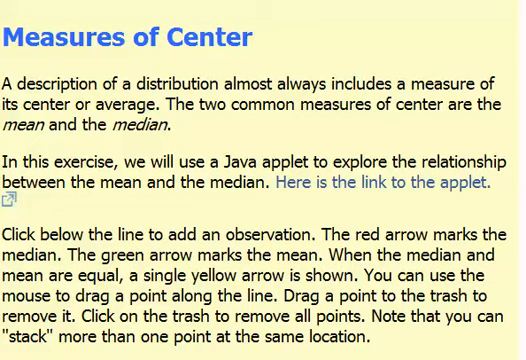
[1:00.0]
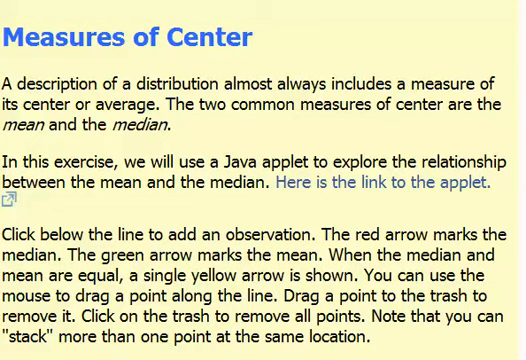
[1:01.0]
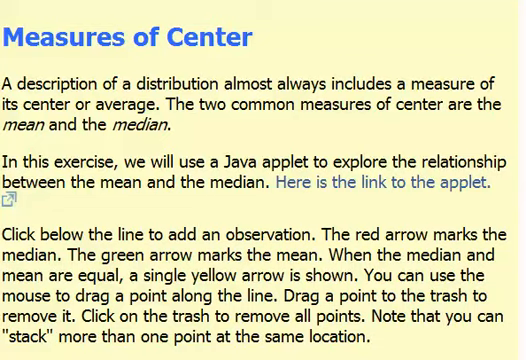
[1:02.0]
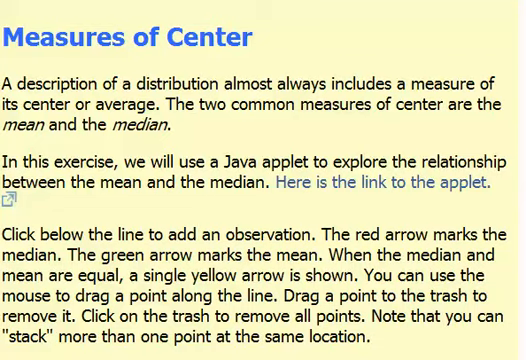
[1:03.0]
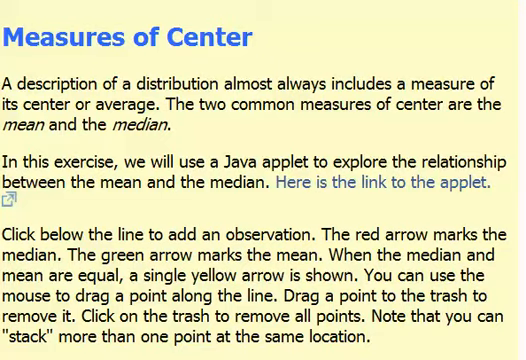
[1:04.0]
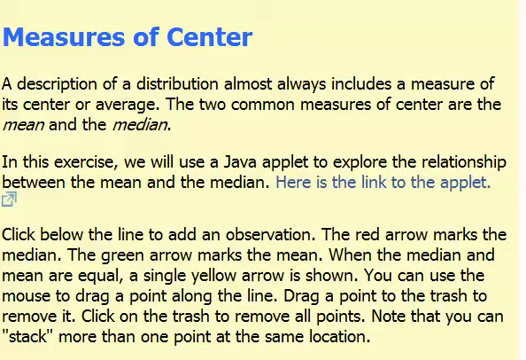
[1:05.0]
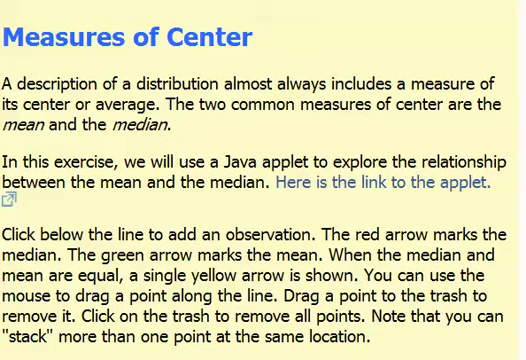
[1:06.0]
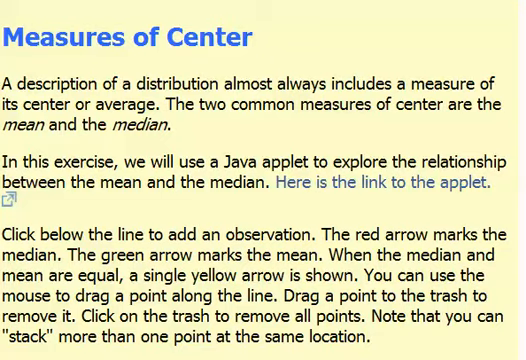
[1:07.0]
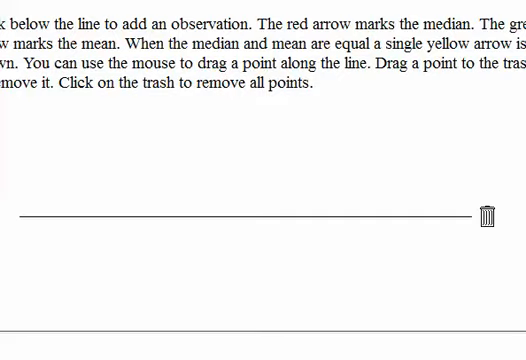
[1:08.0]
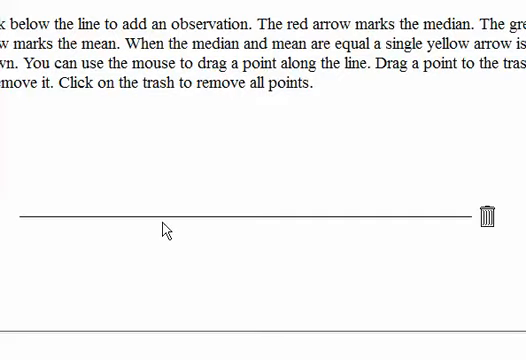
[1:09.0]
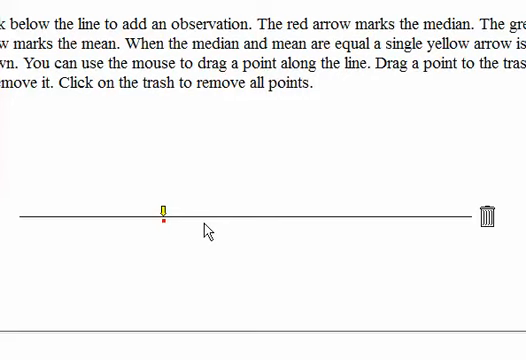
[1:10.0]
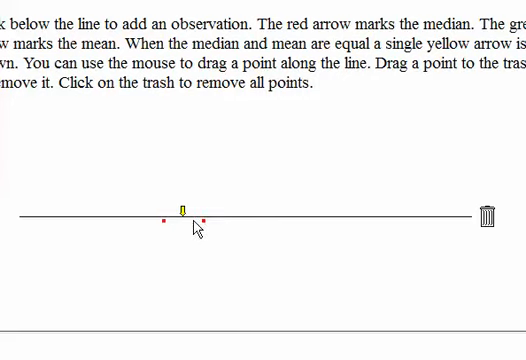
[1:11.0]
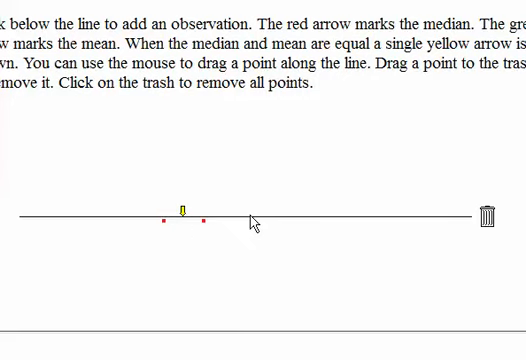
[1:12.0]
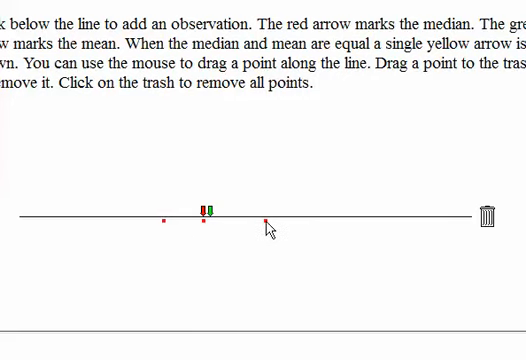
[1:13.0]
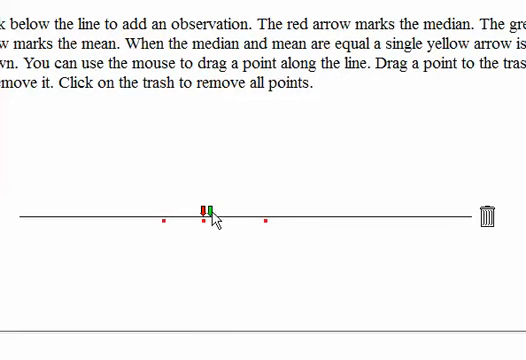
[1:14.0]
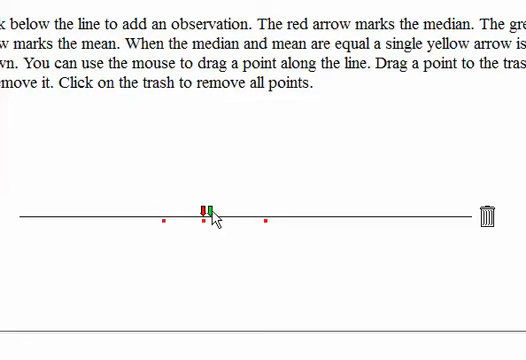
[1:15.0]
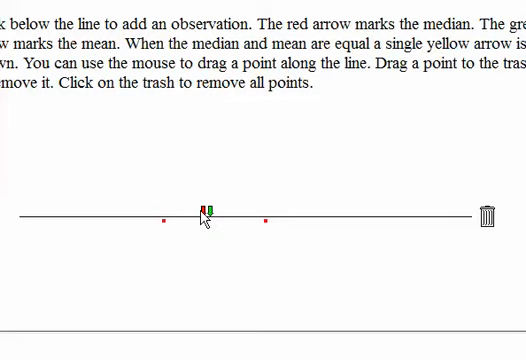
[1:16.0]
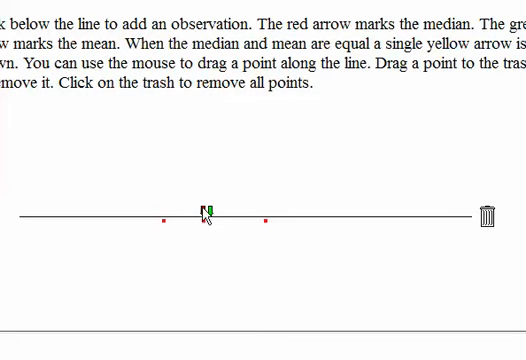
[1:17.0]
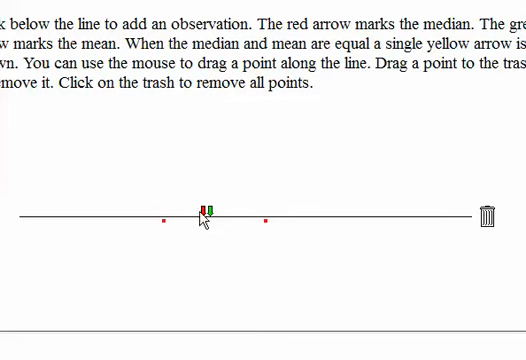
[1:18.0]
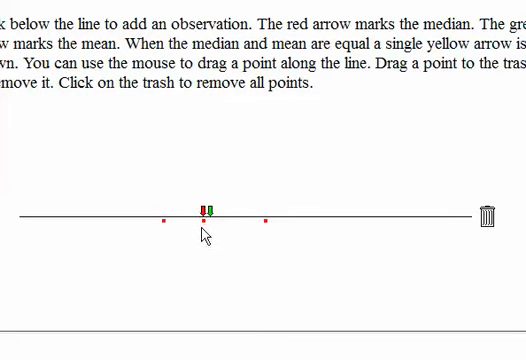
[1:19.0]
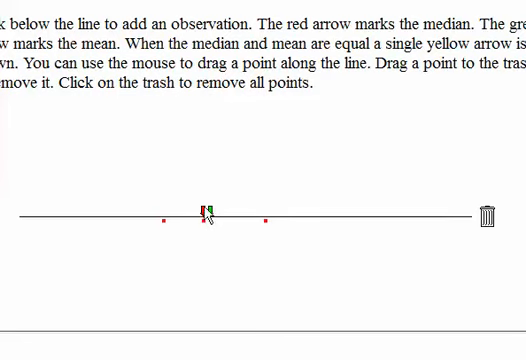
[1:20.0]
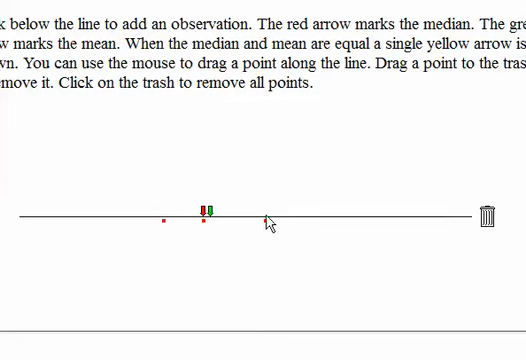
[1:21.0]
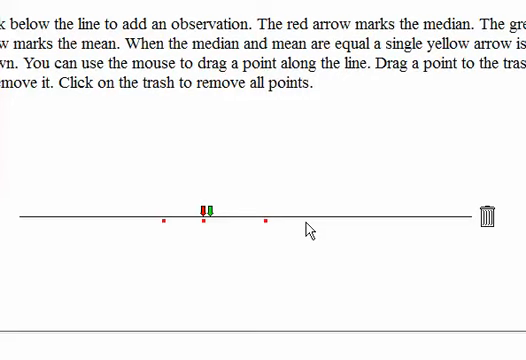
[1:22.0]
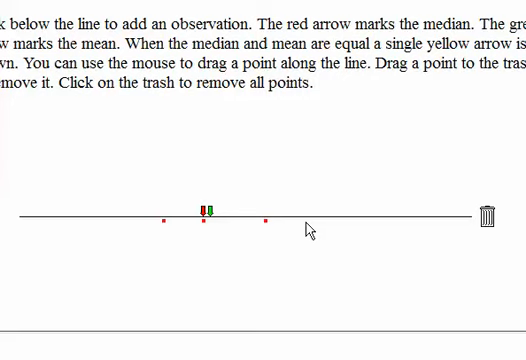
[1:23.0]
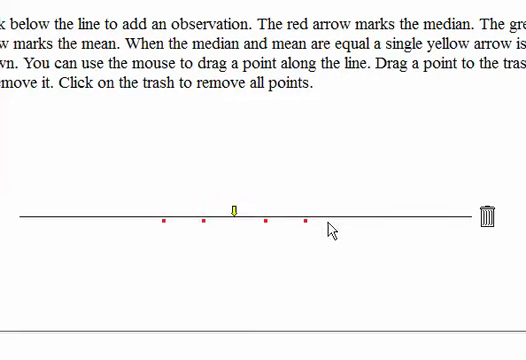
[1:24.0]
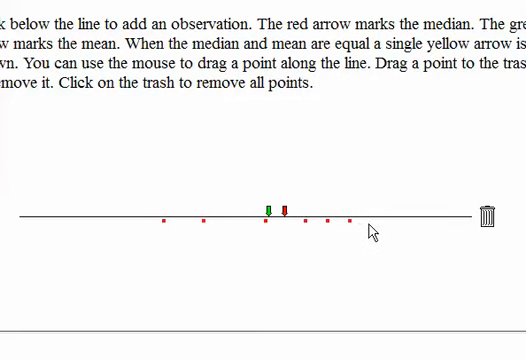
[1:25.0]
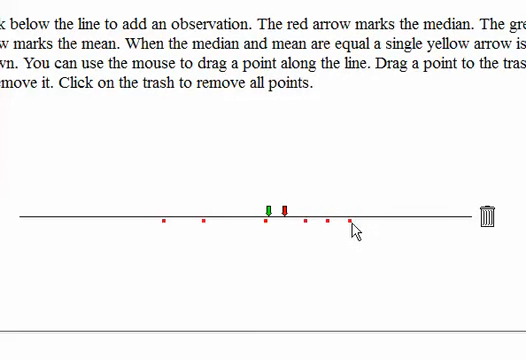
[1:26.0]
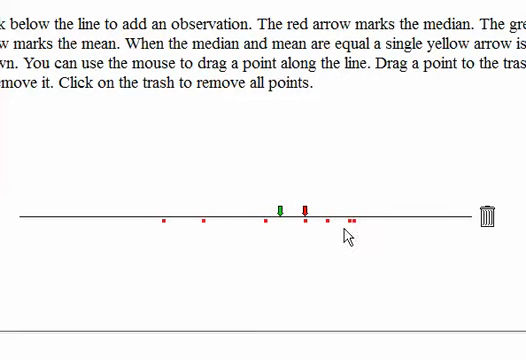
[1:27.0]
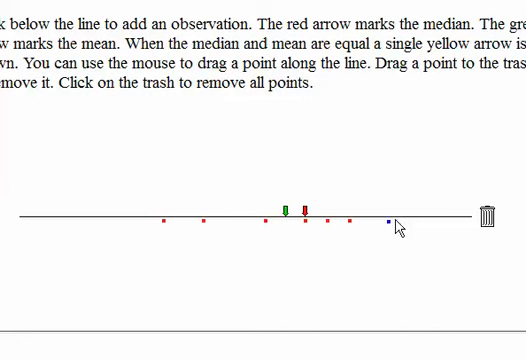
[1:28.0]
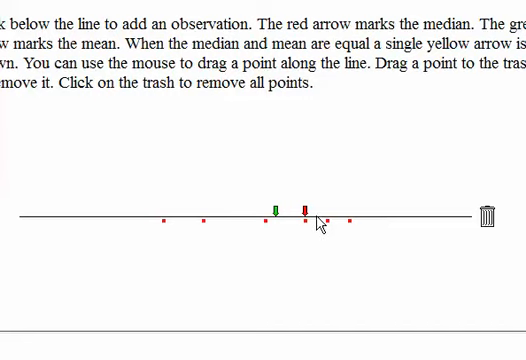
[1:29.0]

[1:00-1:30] Several paragraphs of text about measures of center are on the page, with the instruction below reading "click below the line to add an observation." The view moves to the next page, where the mouse pointer is below the line. The user clicks there to add an observation, then clicks again below the line to add more. Each click below the line adds a red dot and makes little arrows appear above the line: first a red arrow and a green arrow, then, as more are added in different places, a yellow arrow, a red arrow and a green arrow appear in different places above the line. The user grabs red dots with the mouse and moves them back and forth along the line several times, especially the very last point added, dragging it to the right and then to the left. When a point is grabbed, it turns from red to blue, indicating it is the point being held and dragged with the mouse pointer.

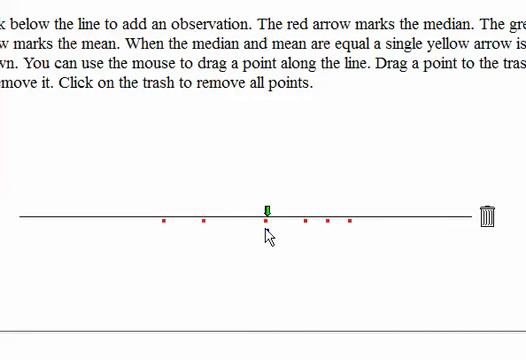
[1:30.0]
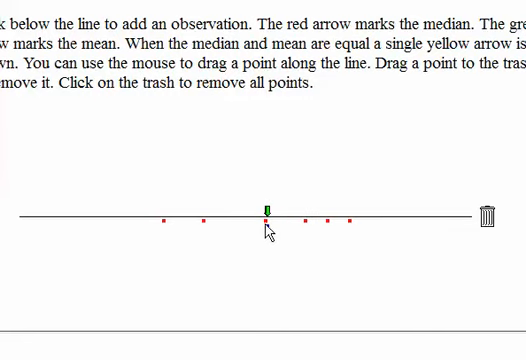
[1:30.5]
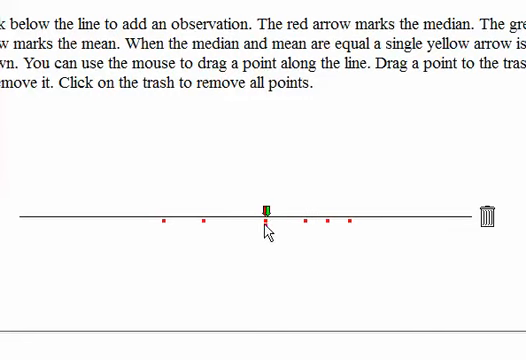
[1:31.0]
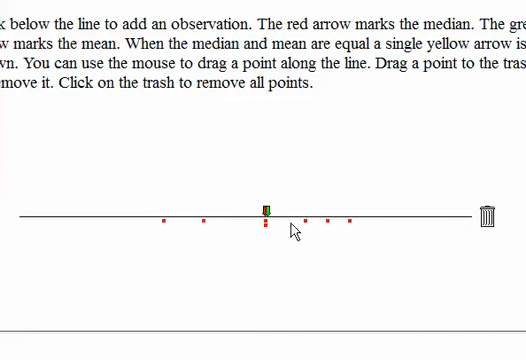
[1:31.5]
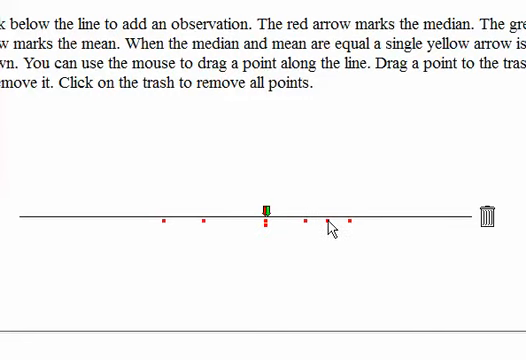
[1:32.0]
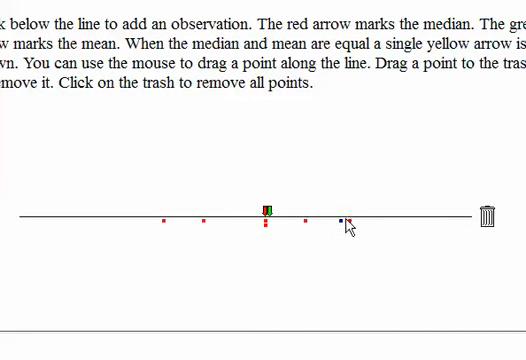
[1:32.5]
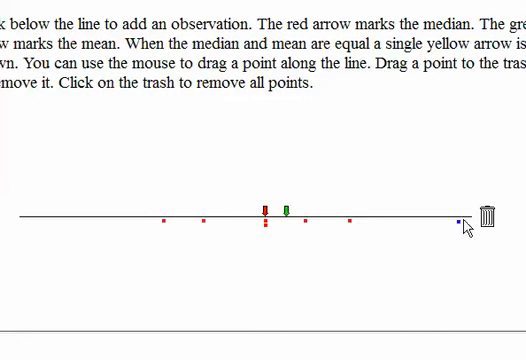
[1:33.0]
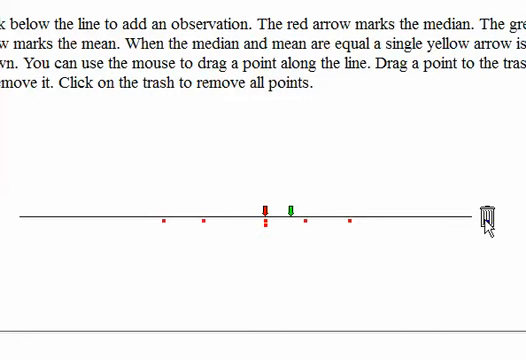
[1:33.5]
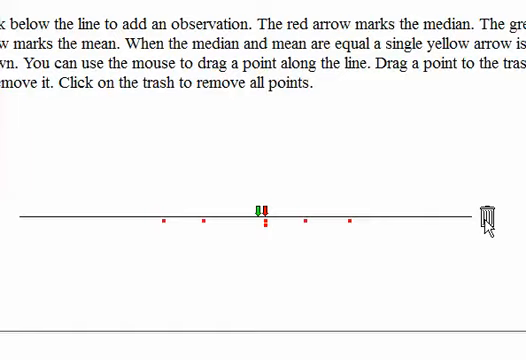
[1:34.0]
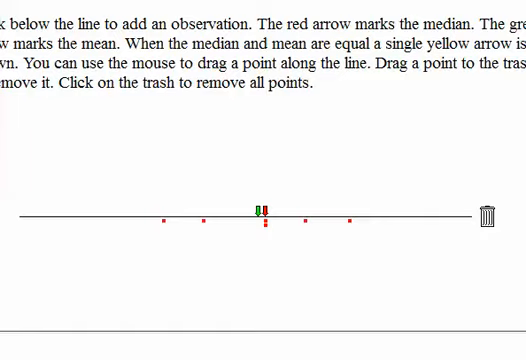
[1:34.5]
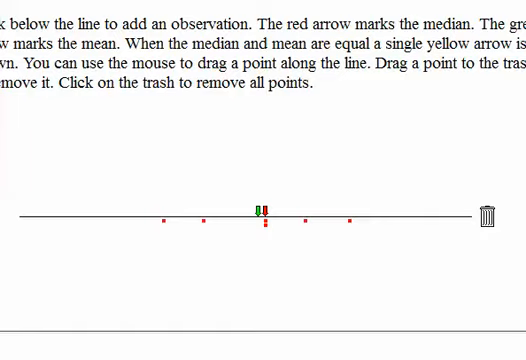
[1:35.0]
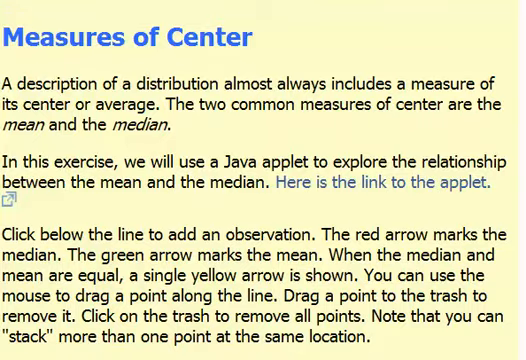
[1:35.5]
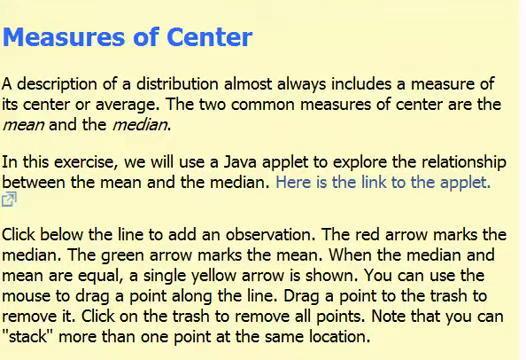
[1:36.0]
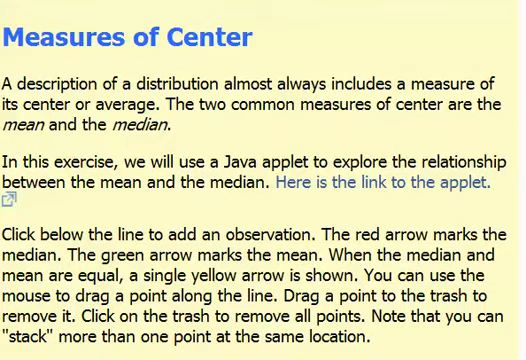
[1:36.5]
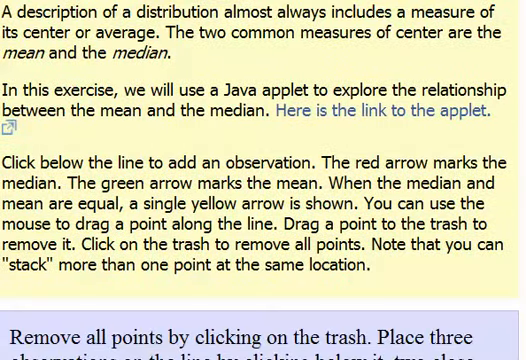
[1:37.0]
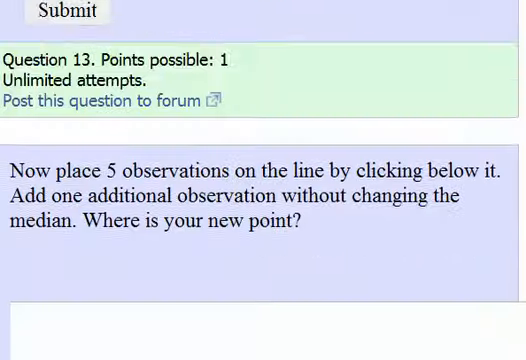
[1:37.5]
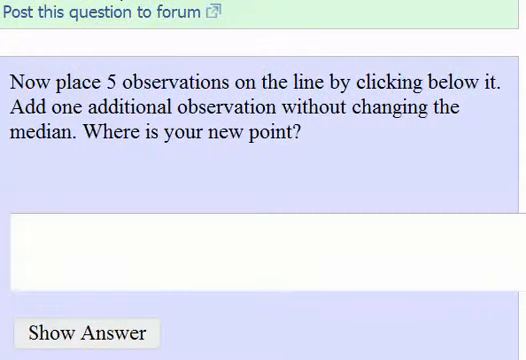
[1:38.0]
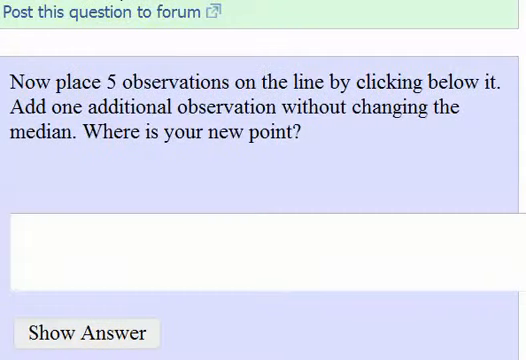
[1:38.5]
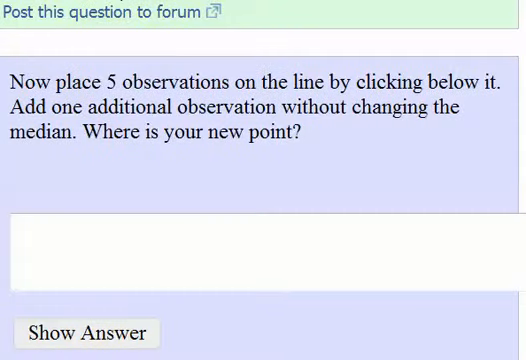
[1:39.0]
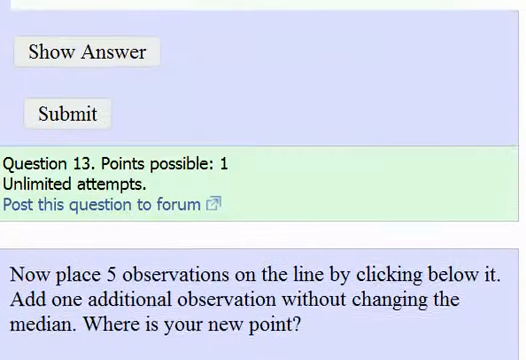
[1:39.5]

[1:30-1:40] The person is using the Java applet at the bottom of the screen, clicking at different points below the line and dragging points. At one point they grab a point, drag it over to the trash can and drop it in, removing it from below the line. The video then goes back to the beginning page, which has a quiz. There are several quiz questions, apparently 13, with A, B and C parts and open fields for typing answers, worth a possible one point with unlimited attempts. The page allows showing the answers and then submitting.